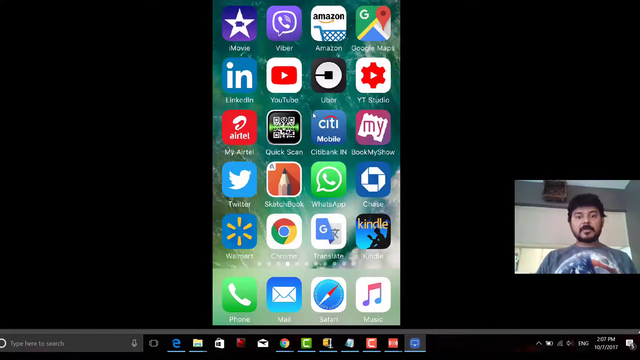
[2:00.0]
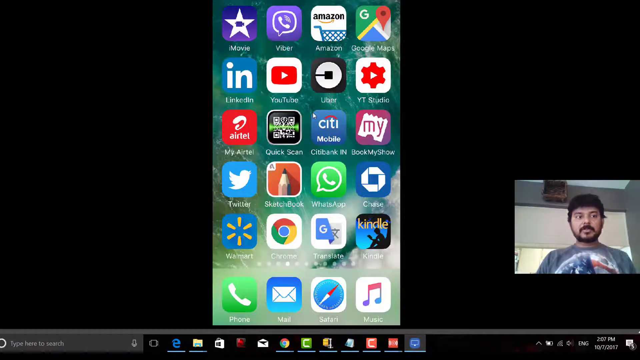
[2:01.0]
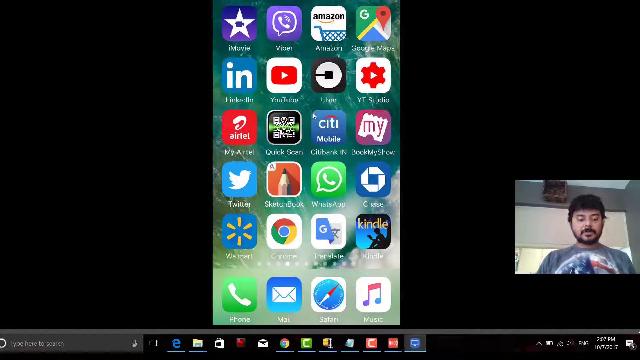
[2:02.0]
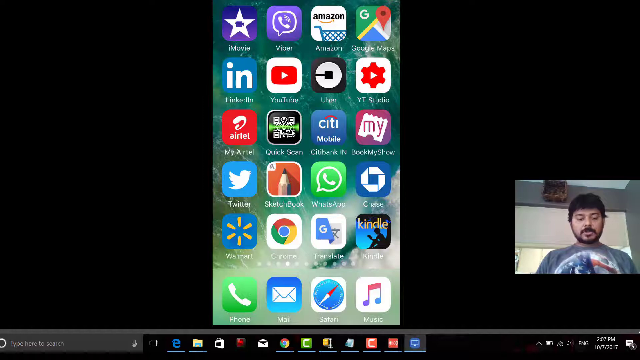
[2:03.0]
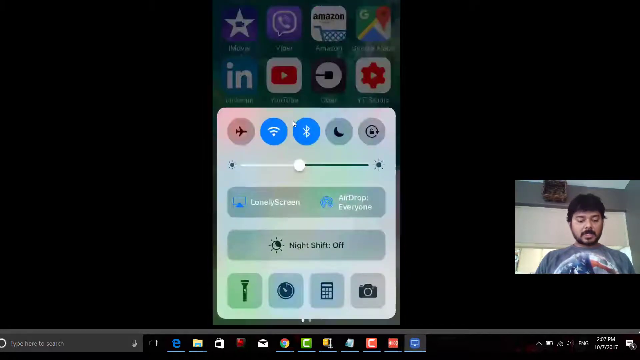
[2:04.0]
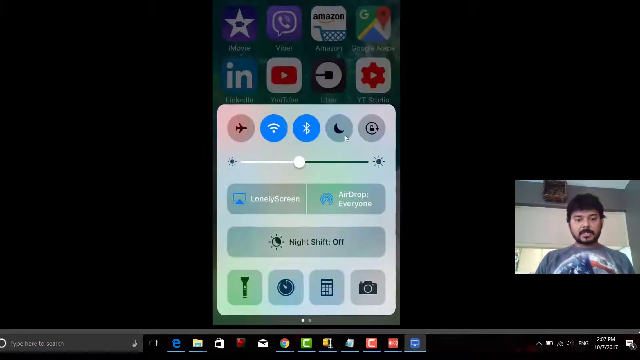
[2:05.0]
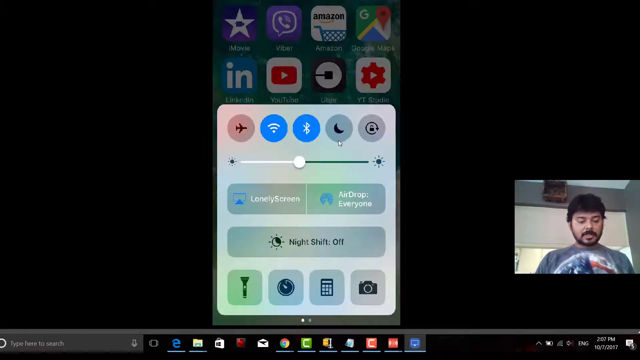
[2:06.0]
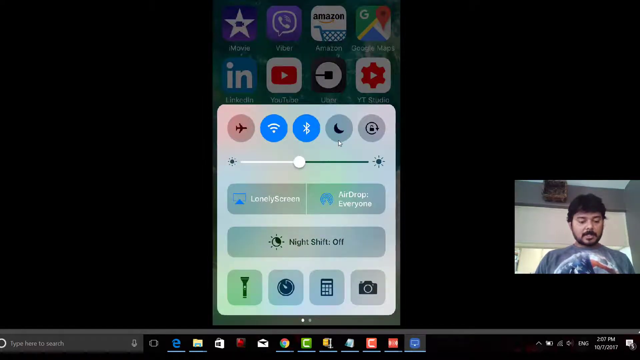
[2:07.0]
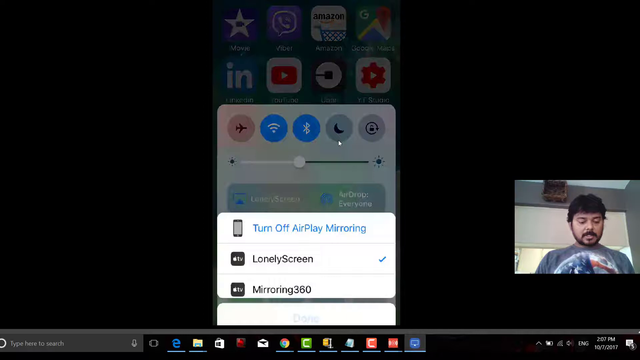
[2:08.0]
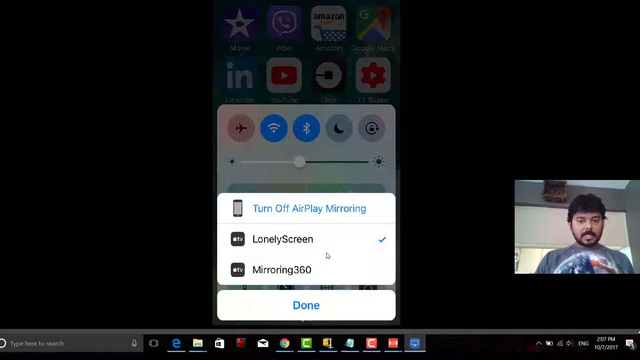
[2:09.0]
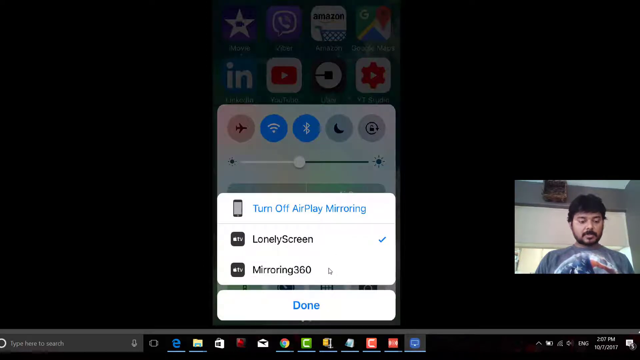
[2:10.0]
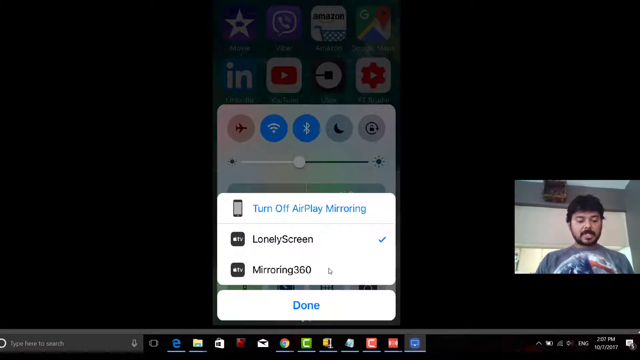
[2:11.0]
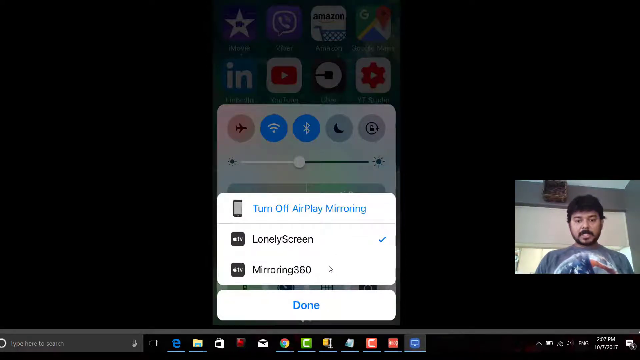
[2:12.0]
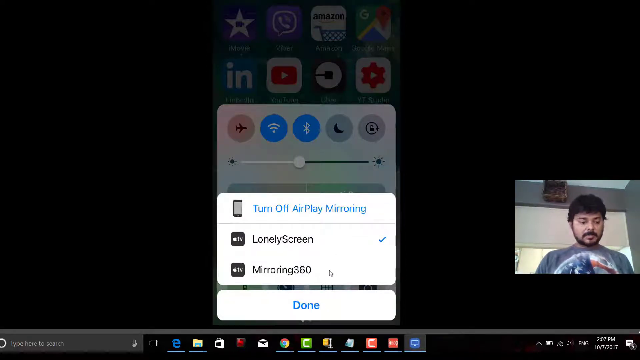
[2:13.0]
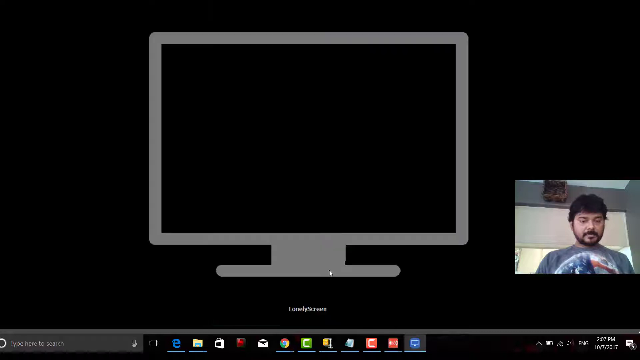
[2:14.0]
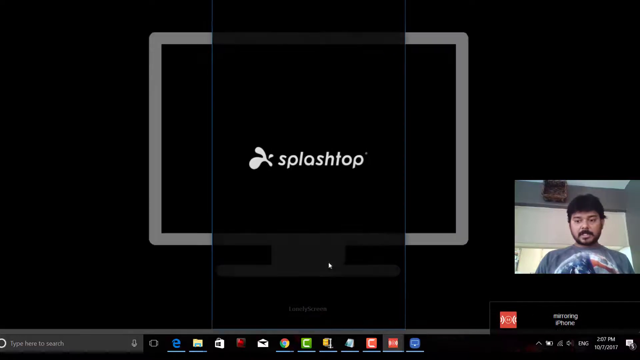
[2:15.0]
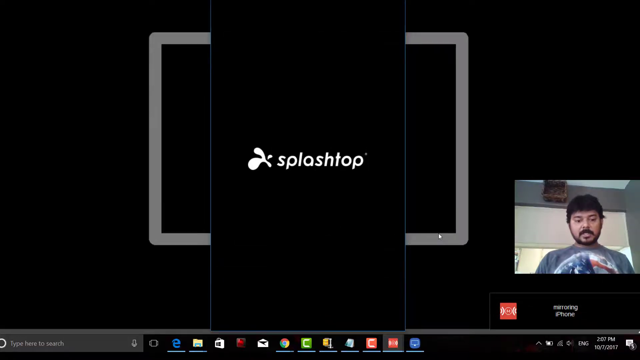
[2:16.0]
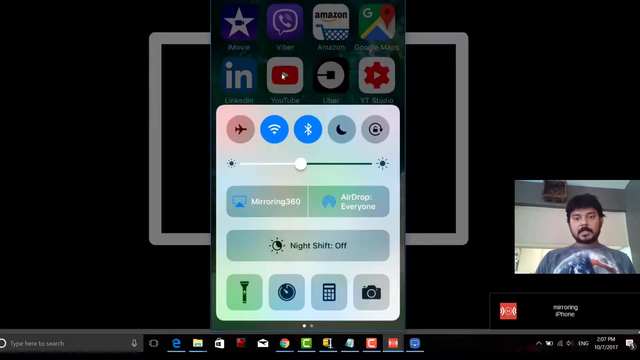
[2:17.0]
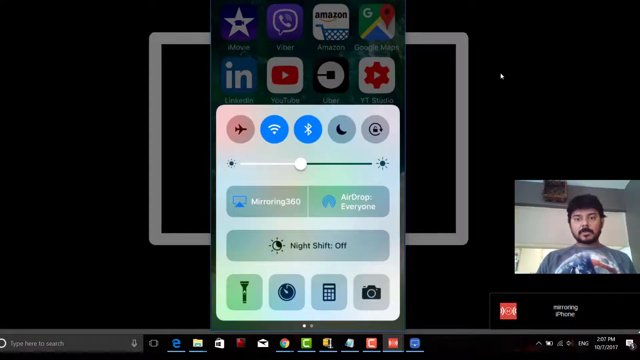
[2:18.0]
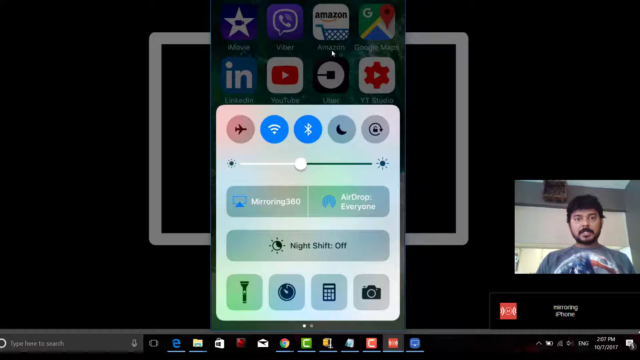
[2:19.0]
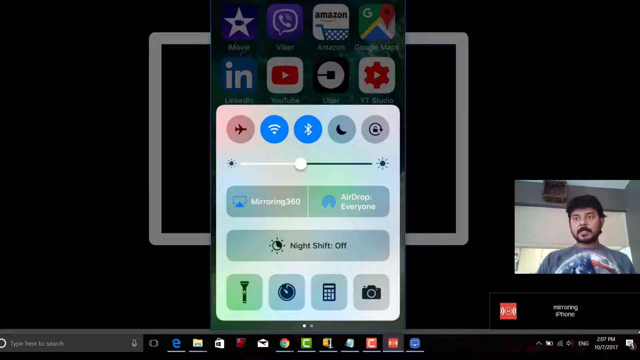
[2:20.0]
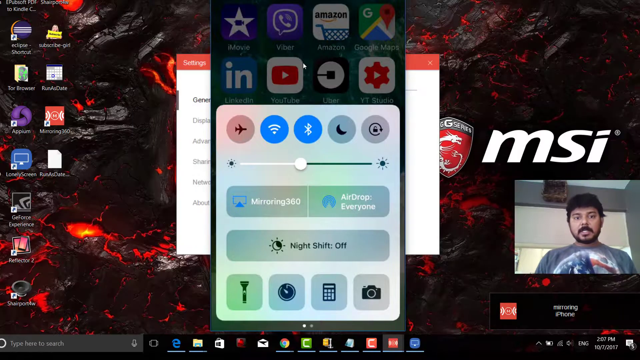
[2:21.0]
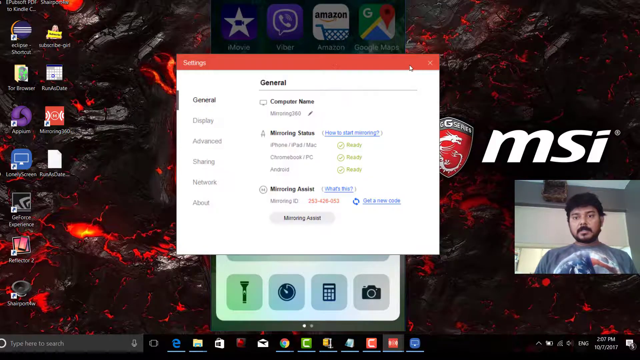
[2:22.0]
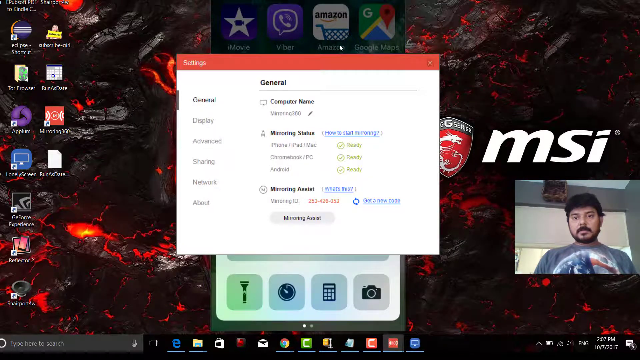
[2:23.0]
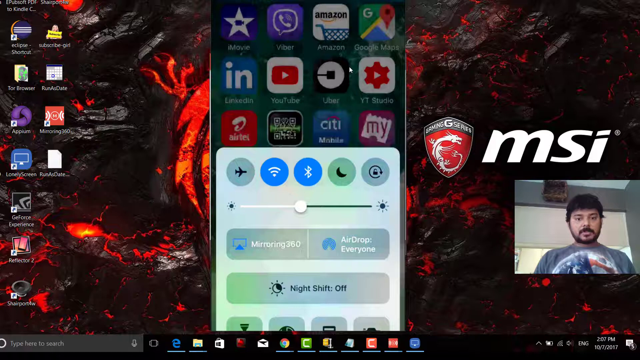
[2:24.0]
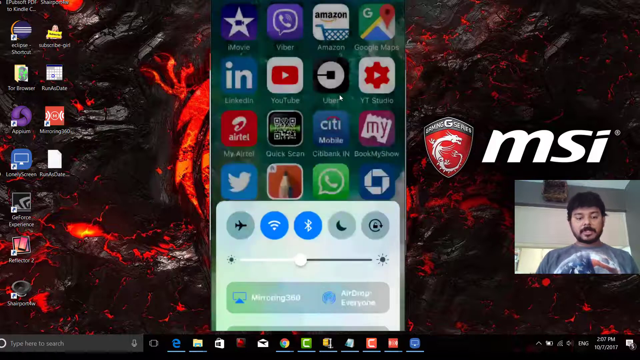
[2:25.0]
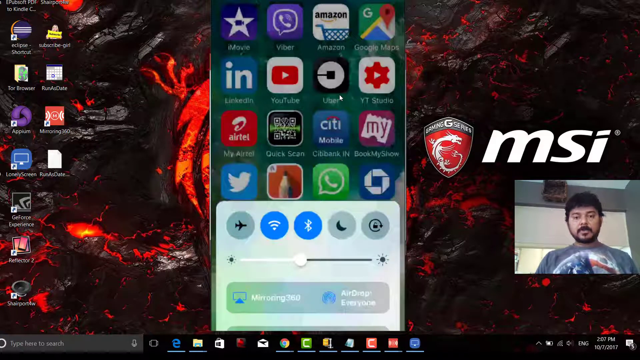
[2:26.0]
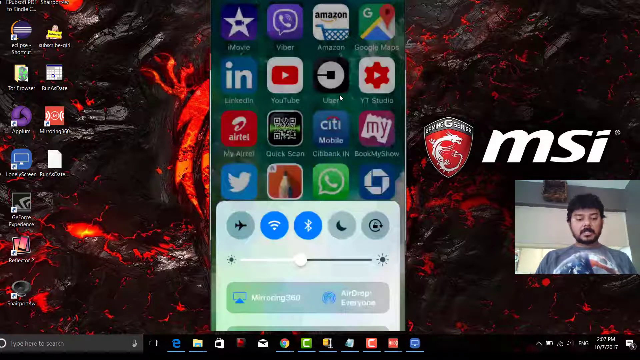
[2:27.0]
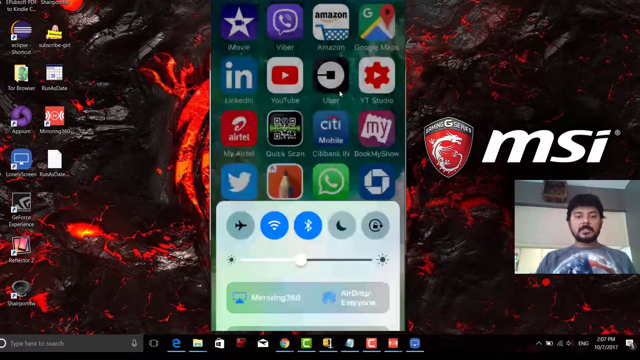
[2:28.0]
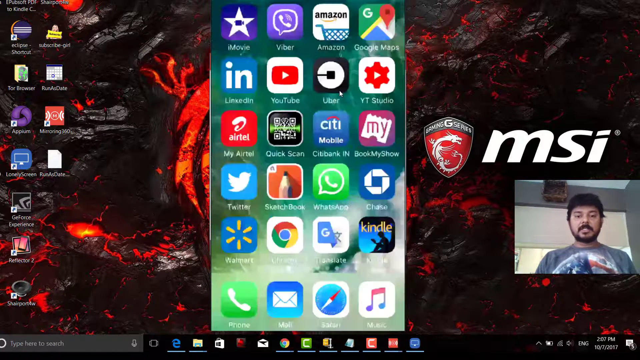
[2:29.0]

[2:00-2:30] A man is kind of vlogging in the lower right corner, in a box. A page is open that mirrors a screen showing all the icons and apps. He clicks on the volume and puts it into night mode. Text says "turn off airplay mirroring," and he clicks on mirroring 360. In the background a "splash top" window has popped up, and he adjusts markings on the page in that area. The apps on the screen include Twitter, a Walmart app, a WhatsApp app, a Citibank mobile app, something that says "block my show," YT Studio, YouTube, LinkedIn, and others.